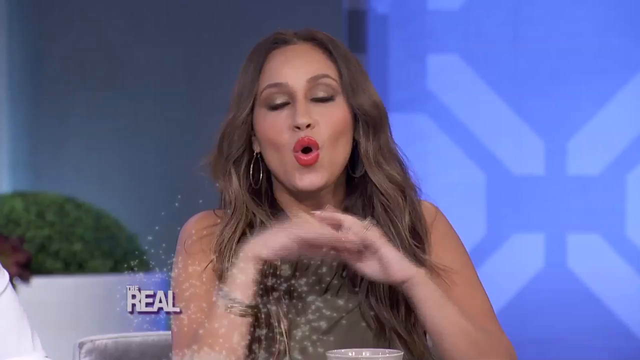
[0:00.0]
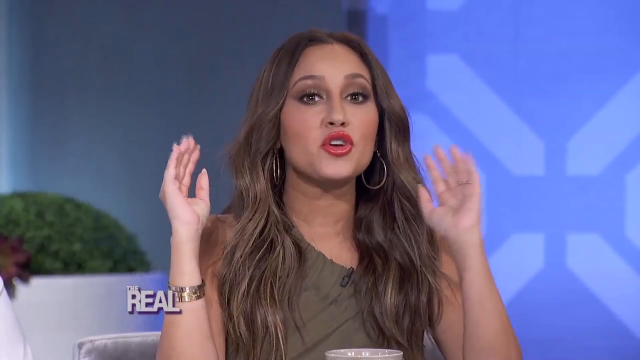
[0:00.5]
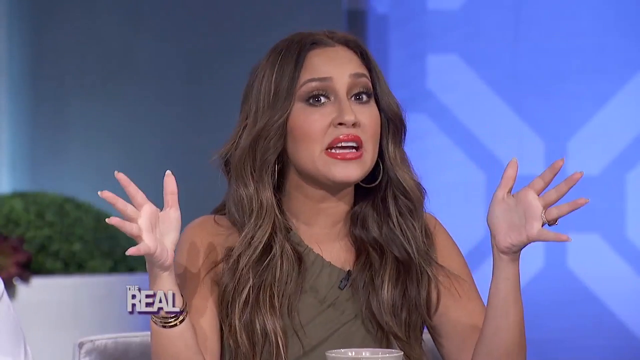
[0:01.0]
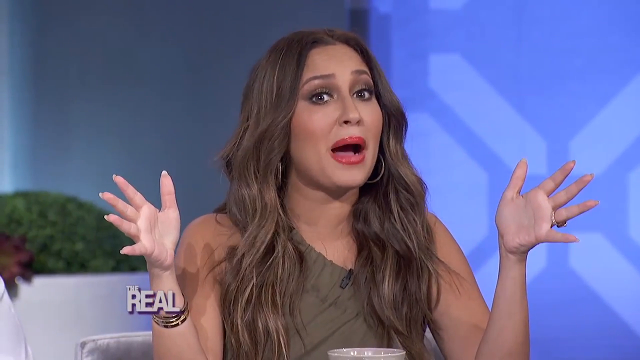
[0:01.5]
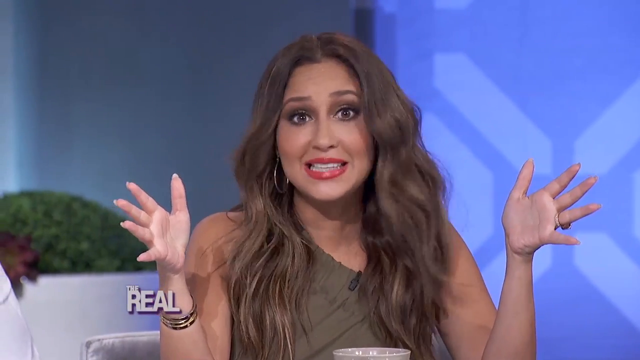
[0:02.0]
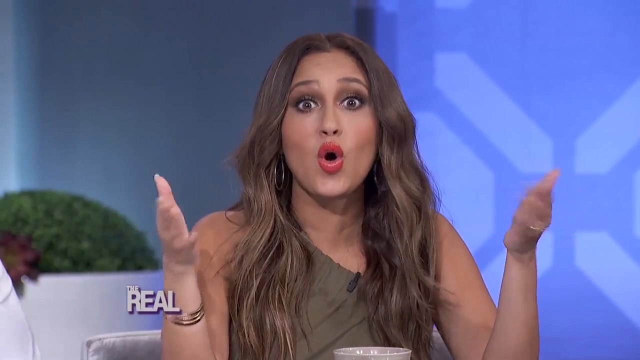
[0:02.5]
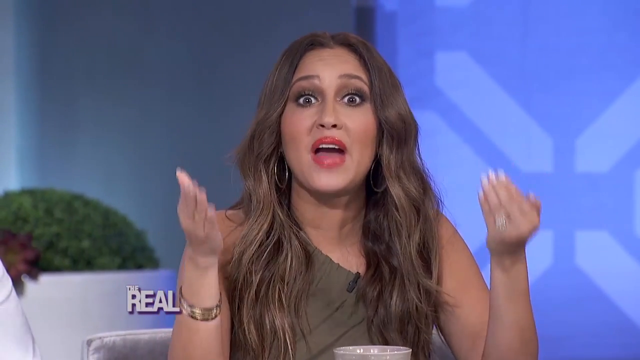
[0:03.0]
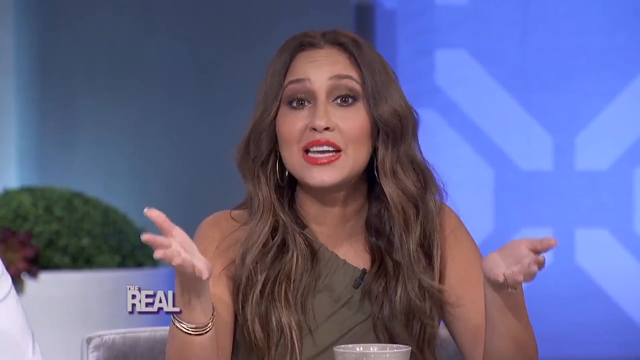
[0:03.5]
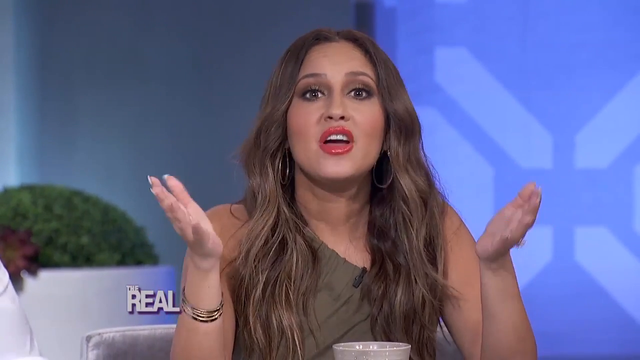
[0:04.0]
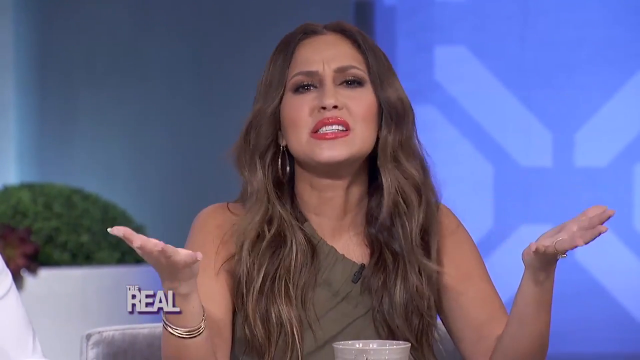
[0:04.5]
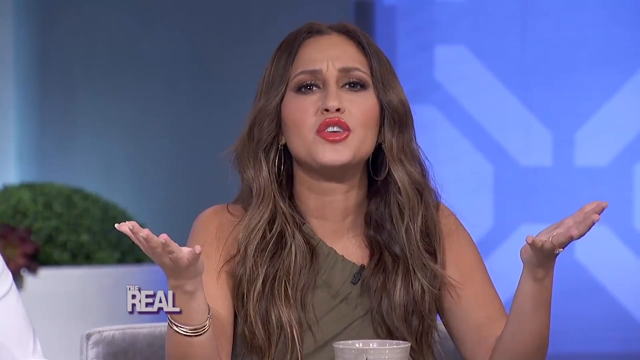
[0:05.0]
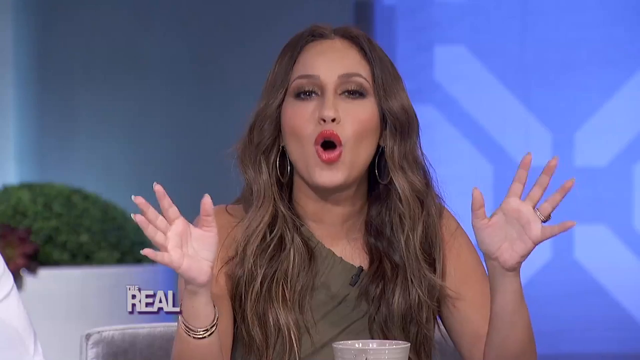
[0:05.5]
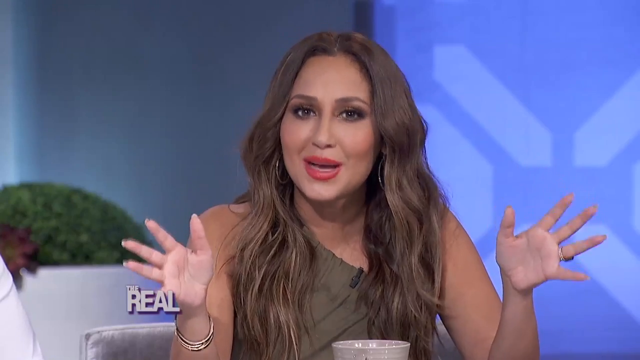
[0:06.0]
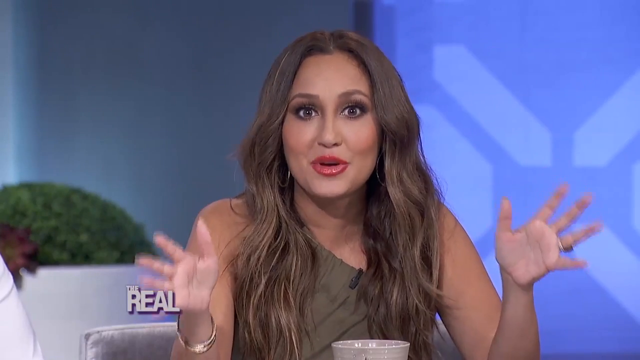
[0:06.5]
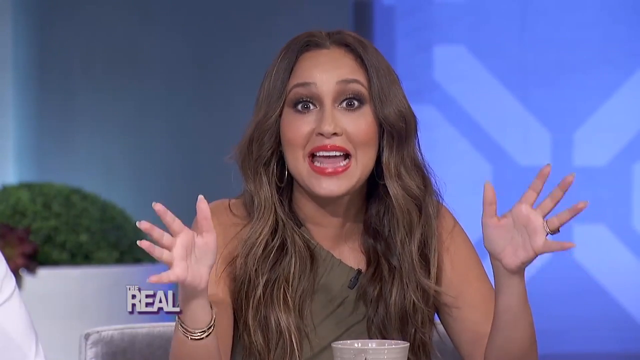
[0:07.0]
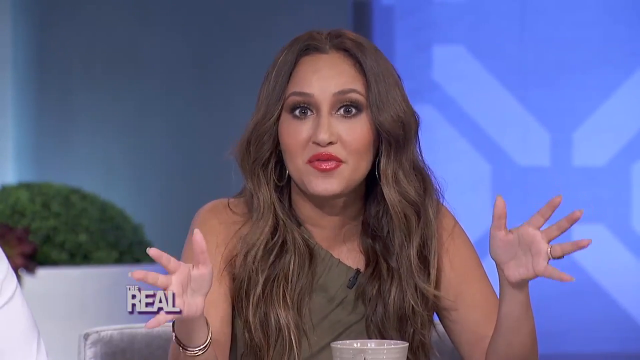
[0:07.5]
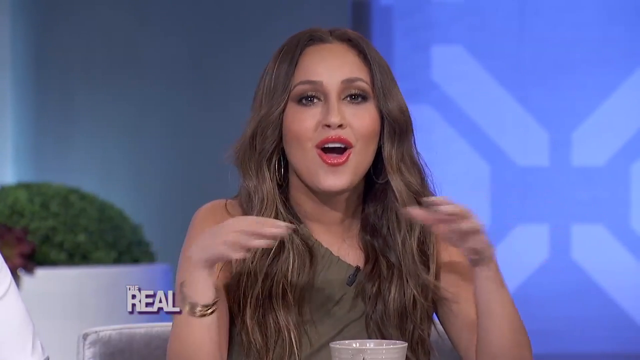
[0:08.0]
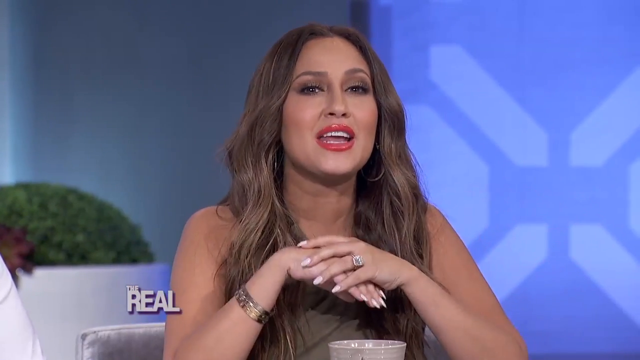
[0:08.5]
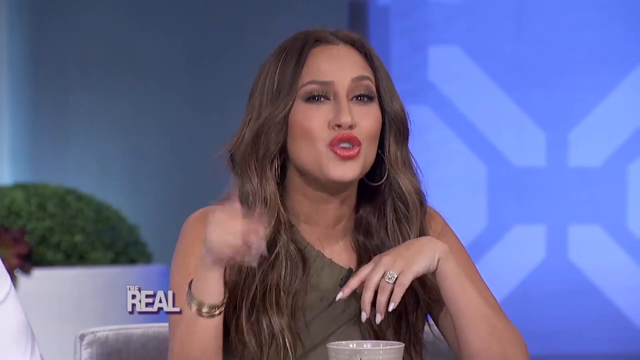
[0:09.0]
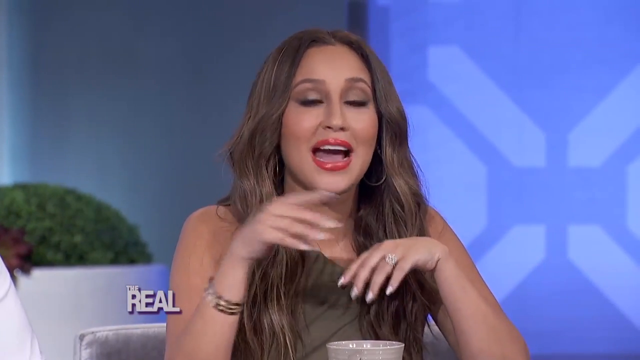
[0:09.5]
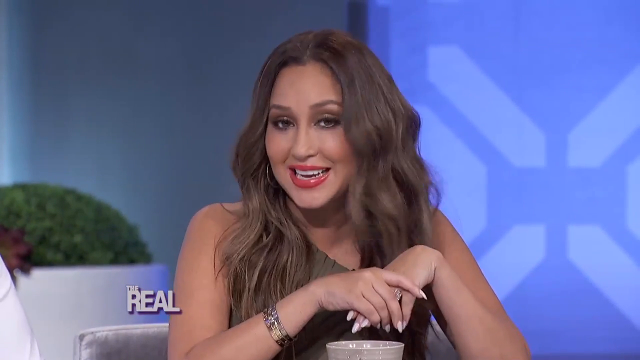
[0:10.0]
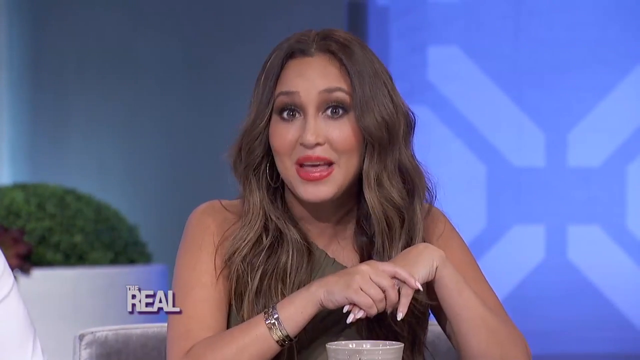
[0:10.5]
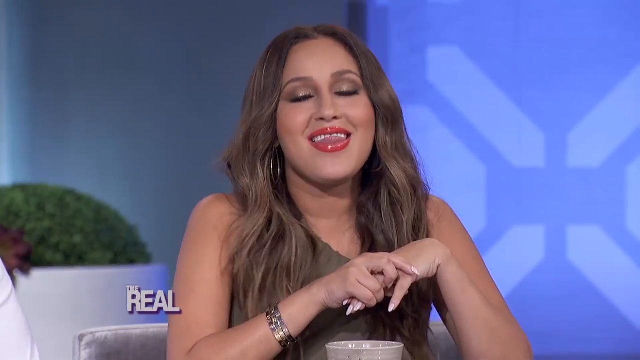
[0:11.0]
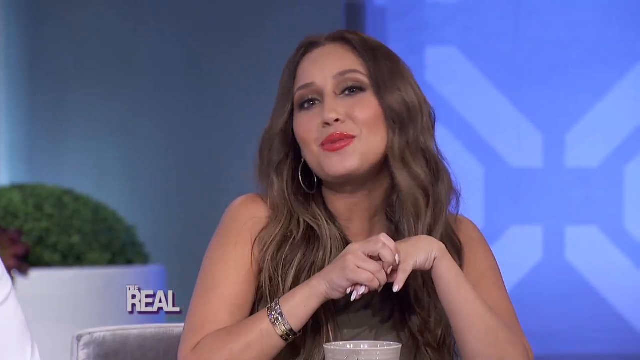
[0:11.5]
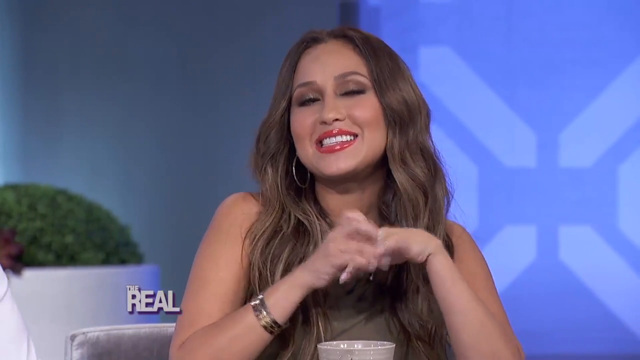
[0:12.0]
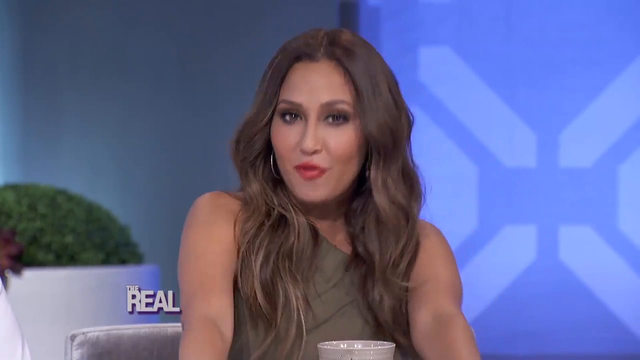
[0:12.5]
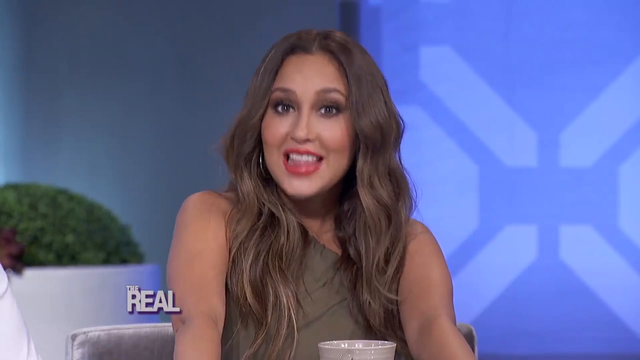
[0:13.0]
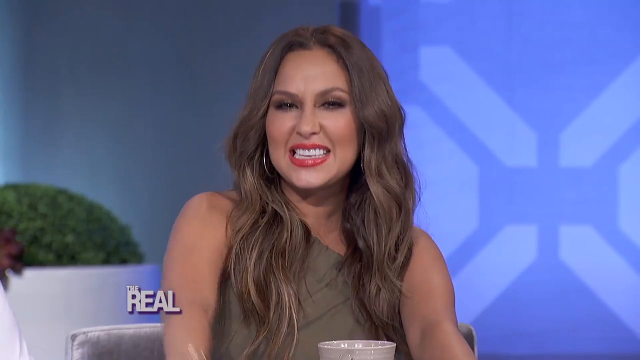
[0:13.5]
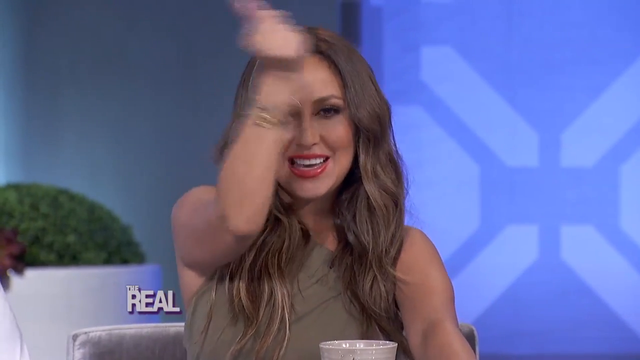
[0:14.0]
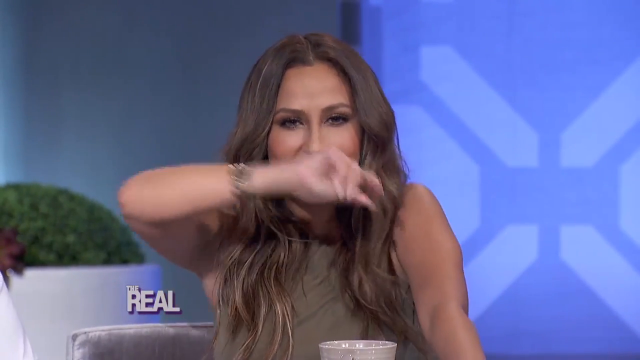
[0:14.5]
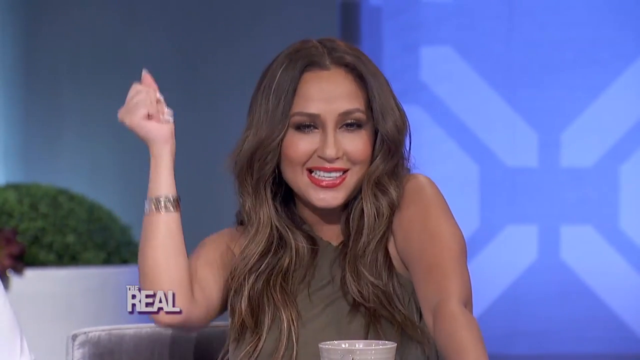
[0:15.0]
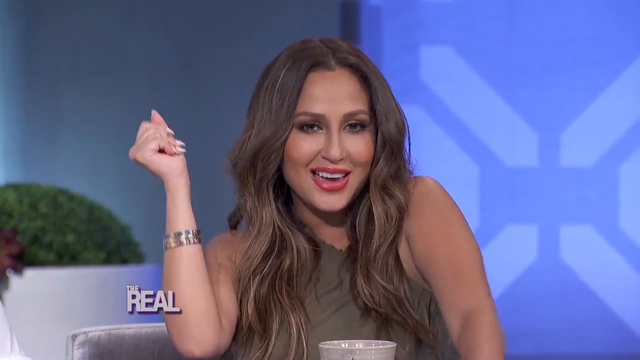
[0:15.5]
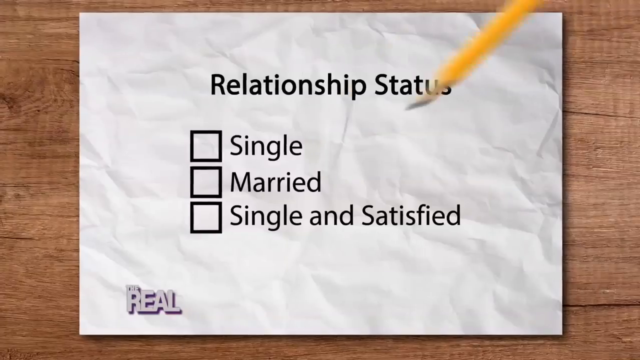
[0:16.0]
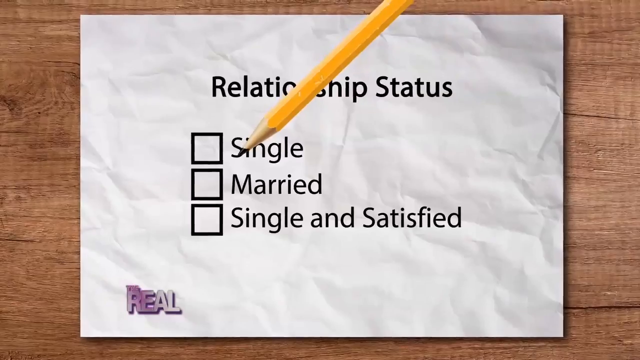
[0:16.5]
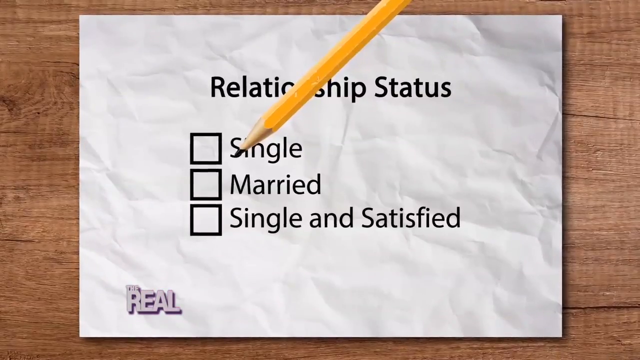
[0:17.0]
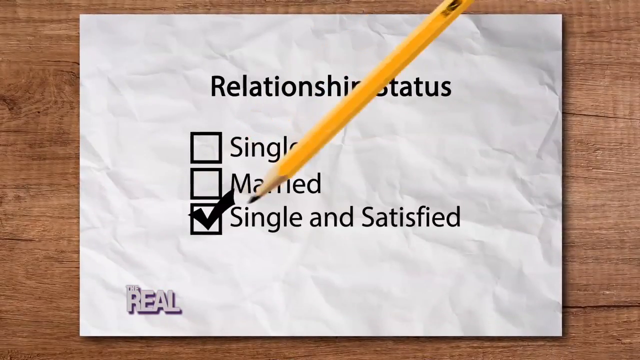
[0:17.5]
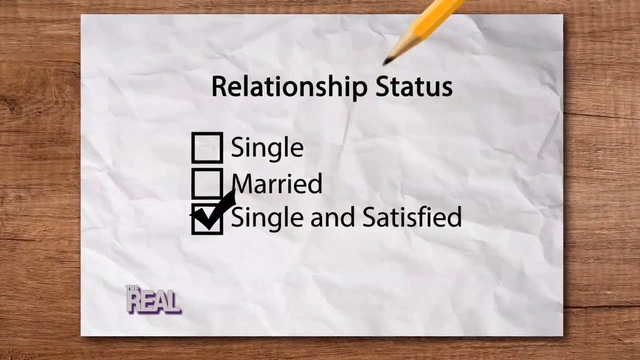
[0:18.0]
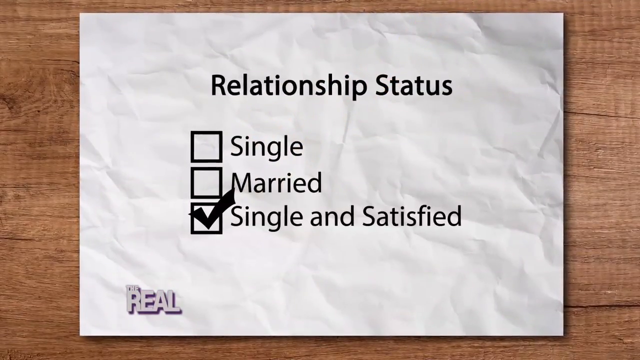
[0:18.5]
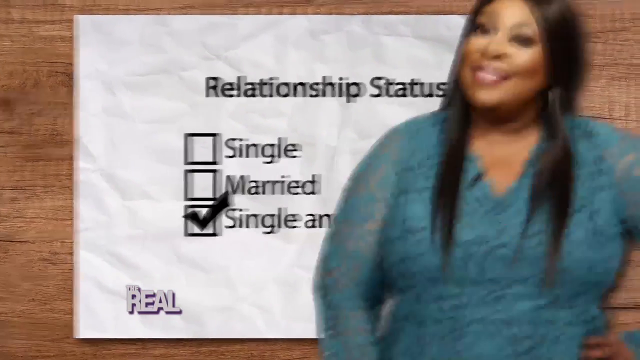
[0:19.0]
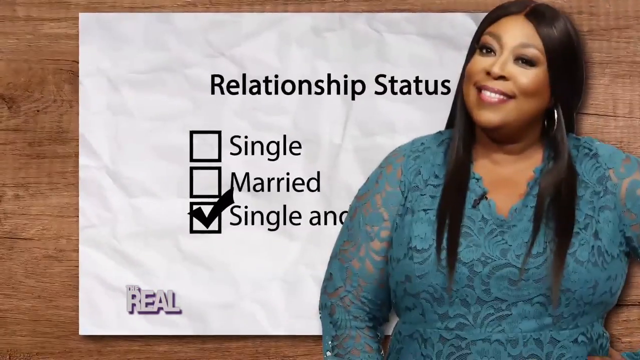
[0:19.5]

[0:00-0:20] A woman is in the center of the frame. She has long brown hair with a light wave in it and appears to wear a full face of makeup: apparently a bright pink lipstick, some sort of taupe eyeshadow, and some kind of mascara and eyeliner. She wears fairly large silver hoop earrings, probably an inch and a half in diameter, and a sleeveless brown top with a curved neckline. She is visible from about her mid torso up. Her elbows maybe rest on a table in front of her; her arms are bent so both hands are up in the air, almost by her head. She is probably in her late 30s and is standing in front of a blue background that appears to have some sort of green shrub in it. She speaks directly to the camera with a sort of worried expression, her eyebrows almost knit together, and uses her hands as she talks. Her hands are open with the palms pointing sort of inward toward each other but not parallel. She then closes her fingers so they are side by side and touching, and sort of points toward the camera, her expression looking almost worried. She continues speaking, pointing her hands toward the camera, very animatedly and with a little smile at some points. She points at the camera with her right index finger, then holds her left hand in her right hand and gives the camera a playful smile as she speaks. She lowers both arms, then raises her right arm and kind of snaps her fingers as she drags her hand to her left and then to her right, smiling with a very sassy kind of expression. The scene changes to a white graphic piece of paper that says "relationship status". Underneath are three boxes, labeled "single", "married" and "single and satisfied". A cartoon pencil comes across the screen from the top of the frame and appears to leave a checkmark in the "single and satisfied" box. Then an image of a woman appears.